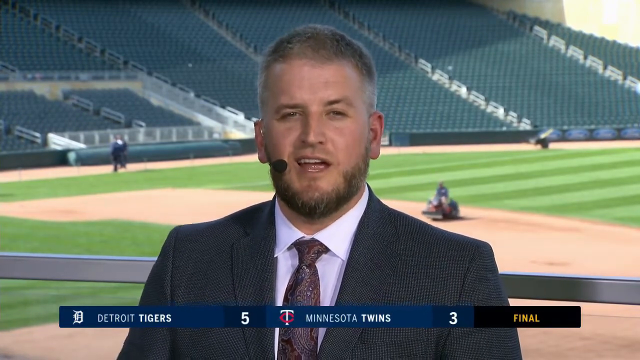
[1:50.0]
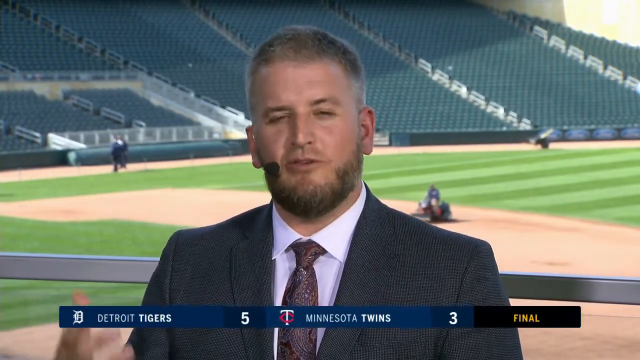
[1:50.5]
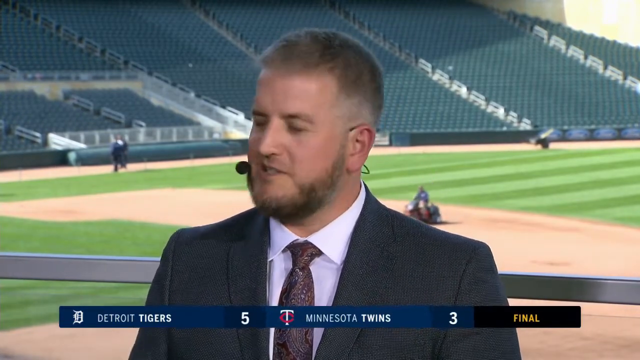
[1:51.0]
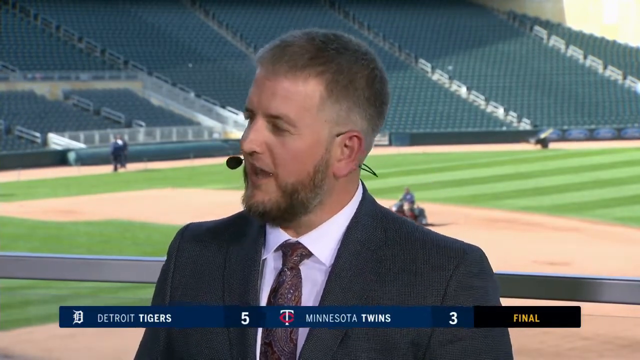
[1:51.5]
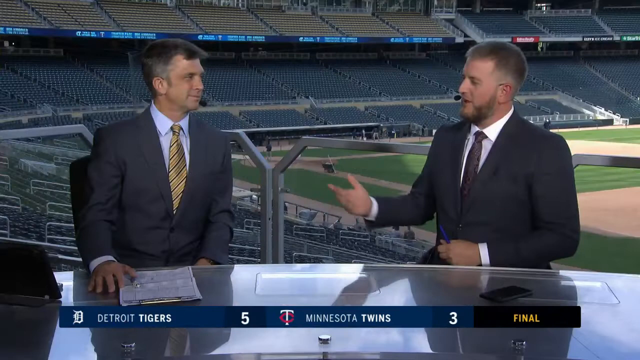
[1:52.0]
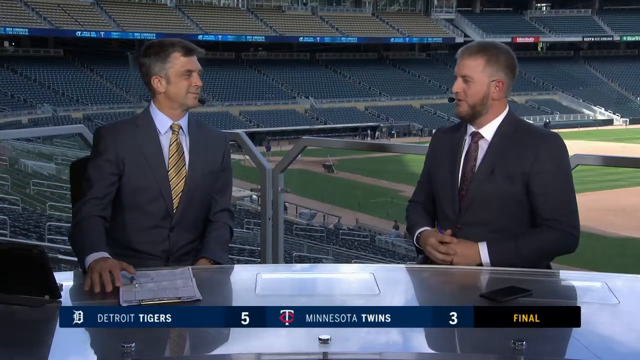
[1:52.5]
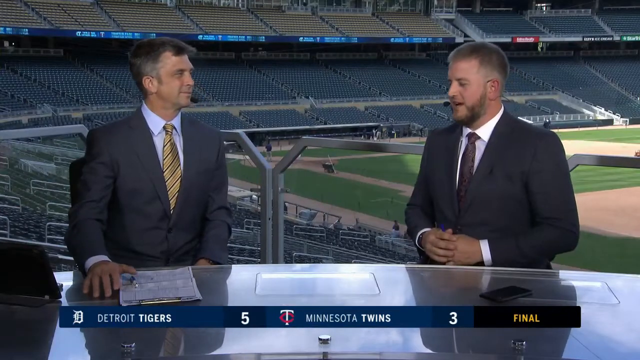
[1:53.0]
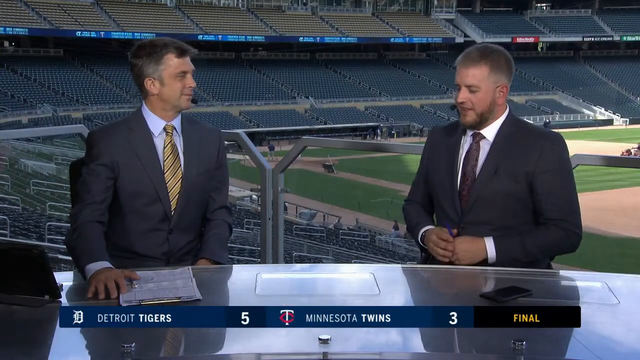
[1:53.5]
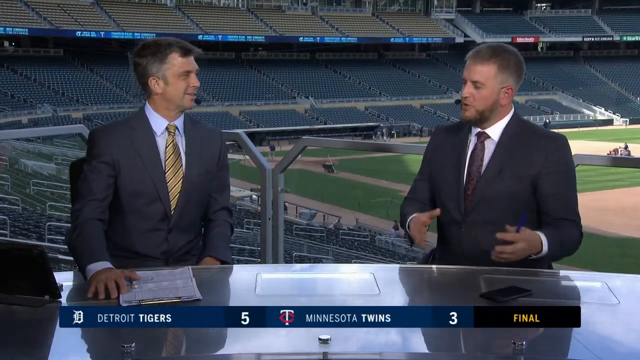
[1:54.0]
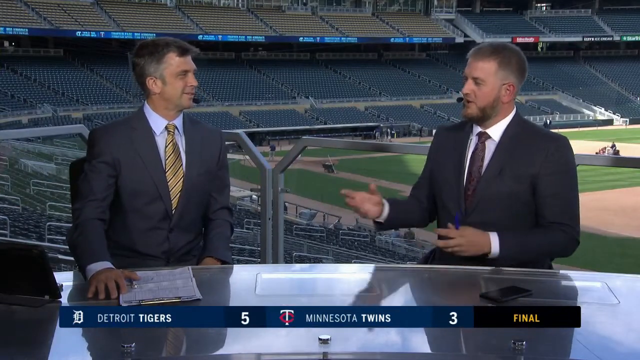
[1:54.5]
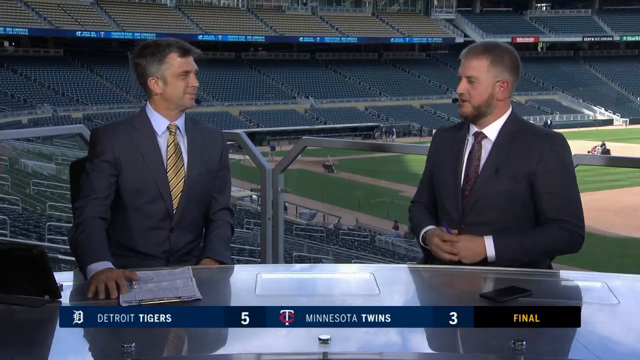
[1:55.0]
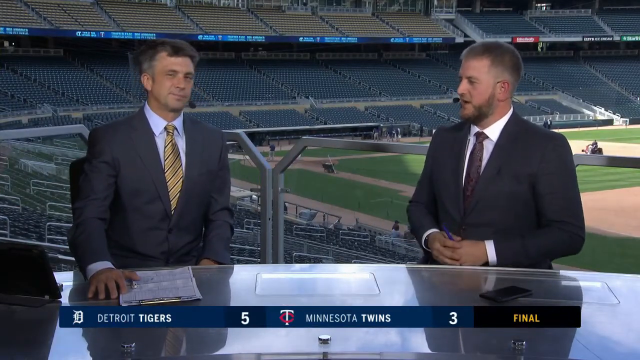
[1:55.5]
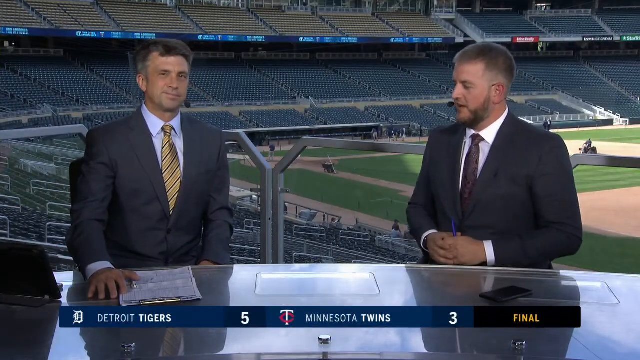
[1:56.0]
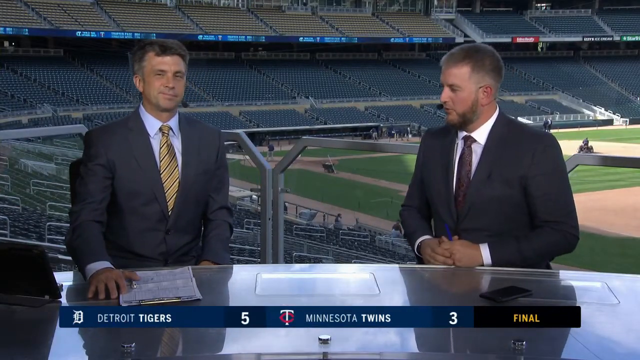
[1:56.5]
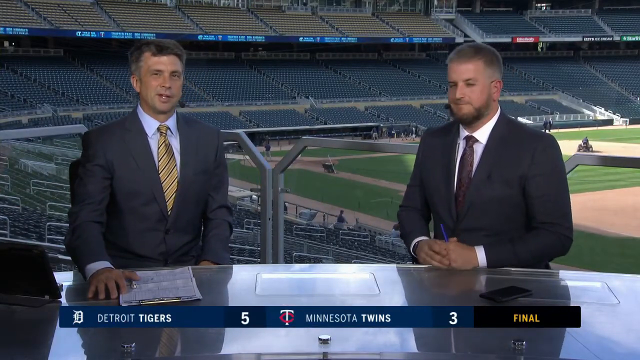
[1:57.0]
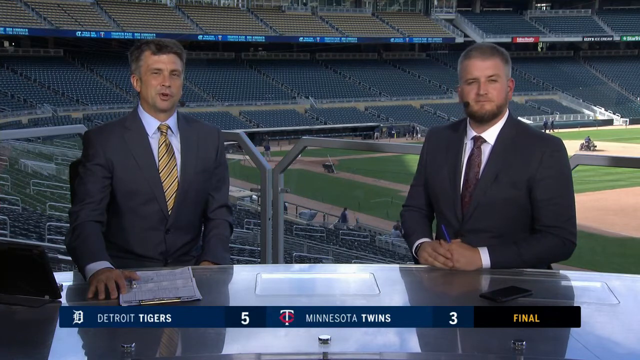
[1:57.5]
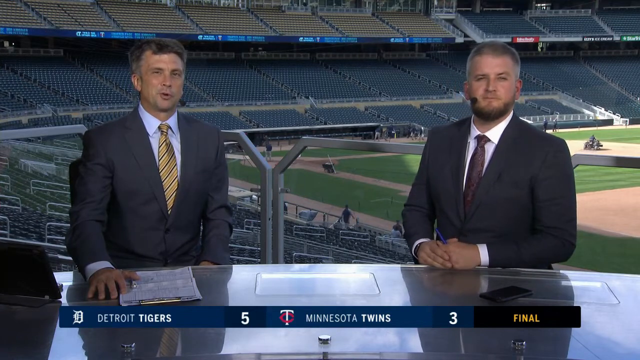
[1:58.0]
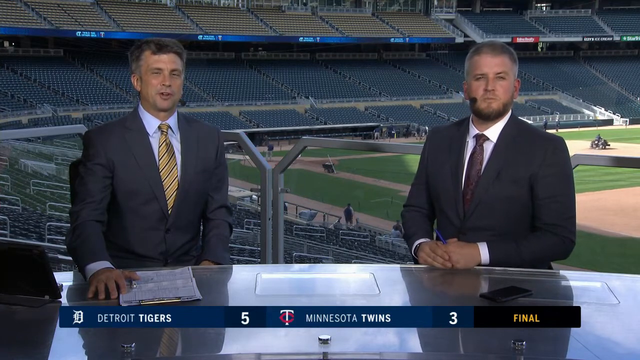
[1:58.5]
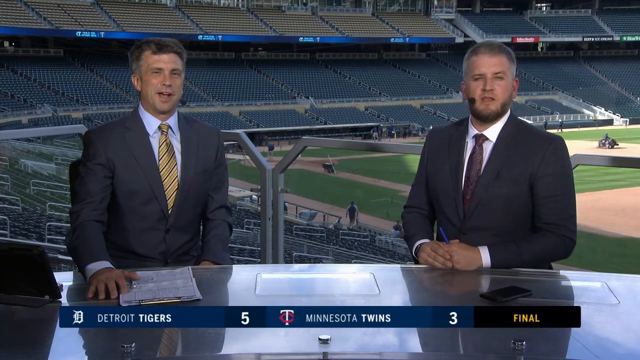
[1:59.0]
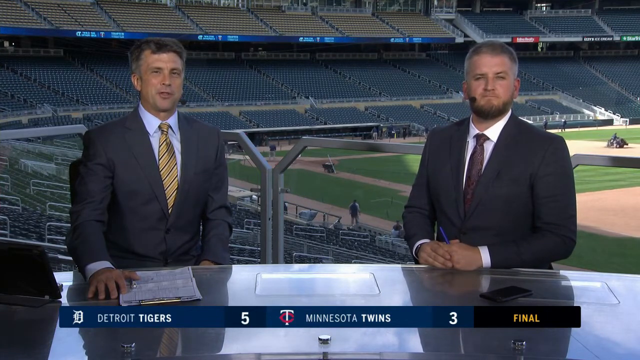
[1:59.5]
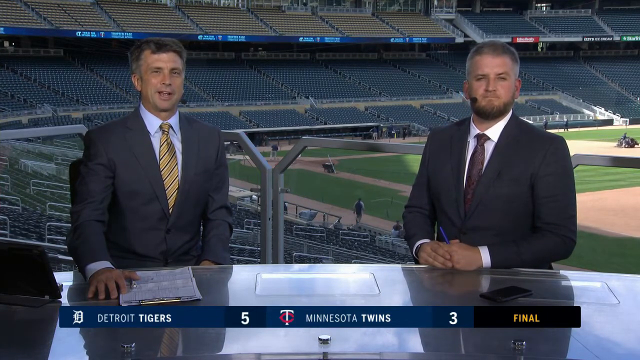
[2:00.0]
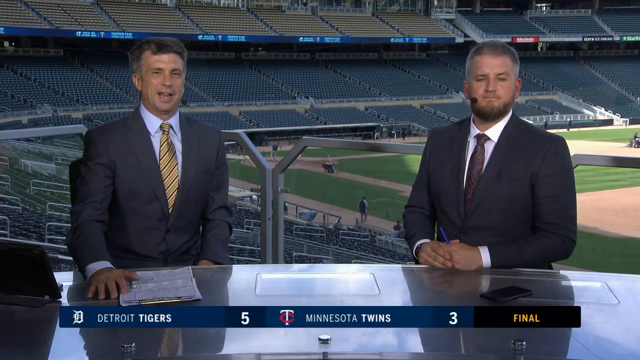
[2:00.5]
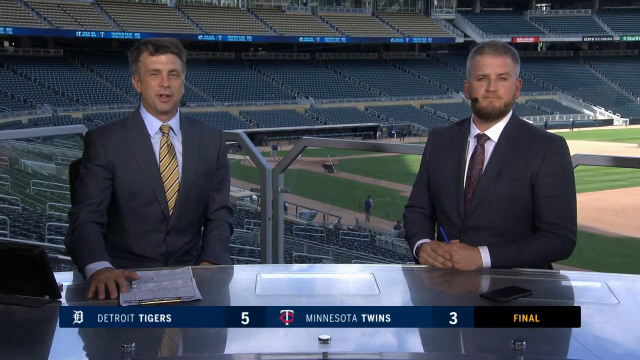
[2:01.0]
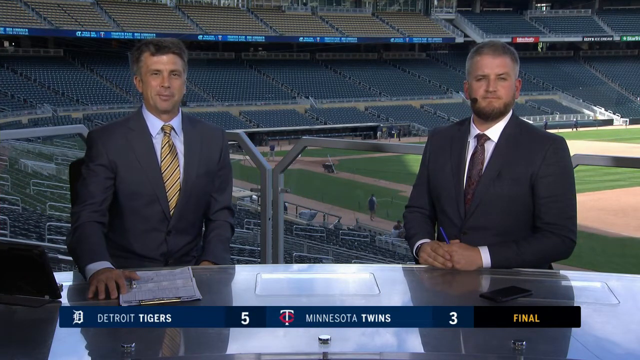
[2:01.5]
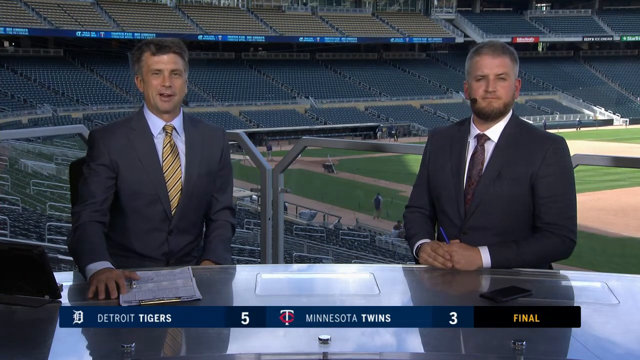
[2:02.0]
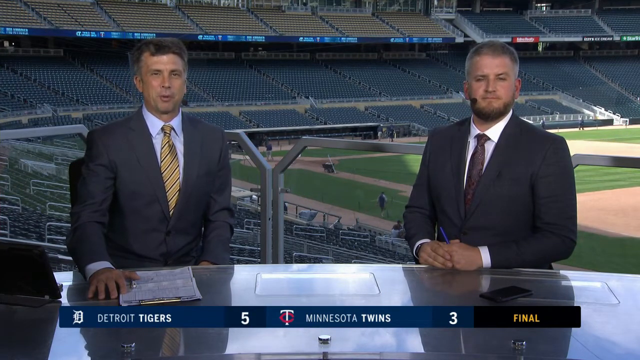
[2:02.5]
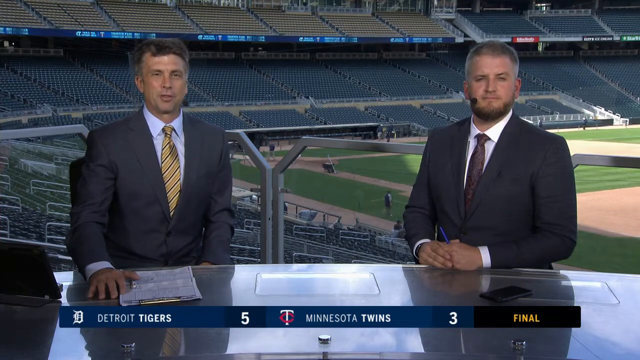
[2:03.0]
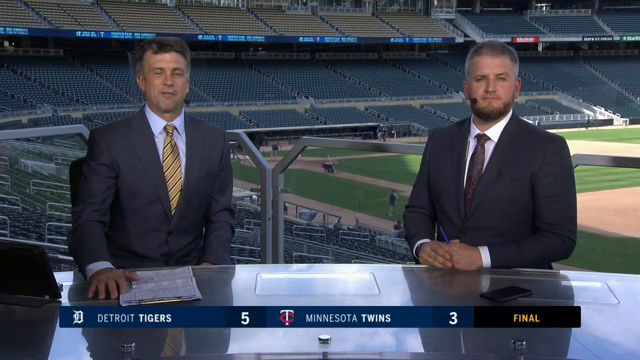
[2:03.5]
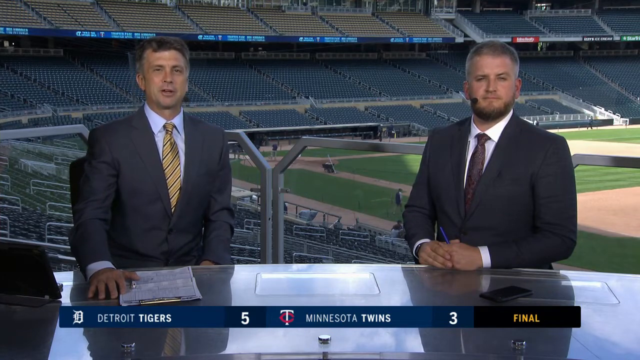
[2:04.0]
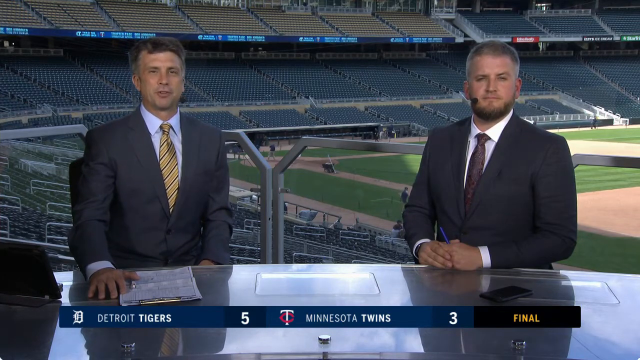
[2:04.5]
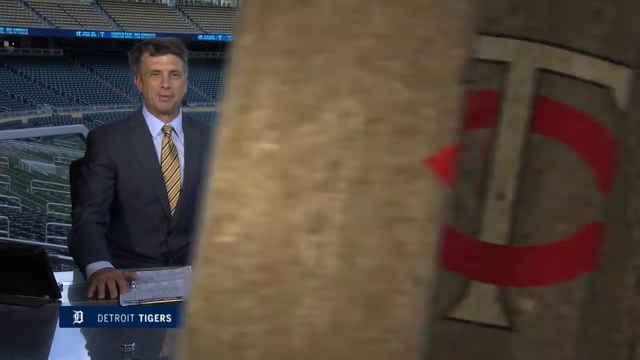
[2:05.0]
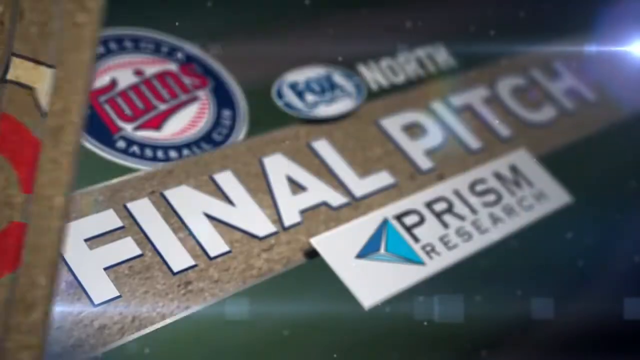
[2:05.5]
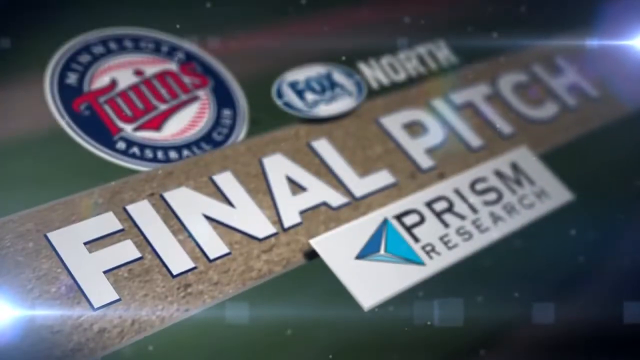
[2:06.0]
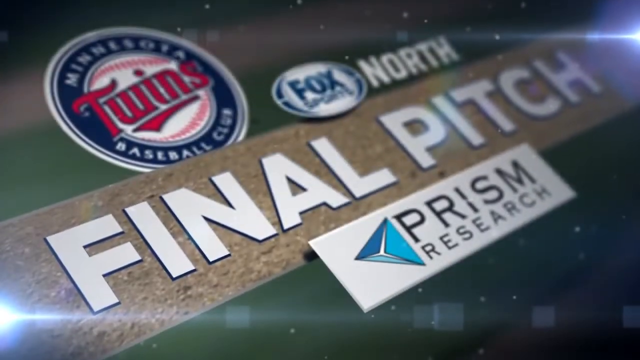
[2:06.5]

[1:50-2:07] The man with the beard speaks to the camera just above field level. The video then cuts back to the two announcers, who now appear about 60 feet back and 90 feet higher than before. Various officials mill about the field, along with the grounds crew and some players in the press area just to the left of the visitors' dugout at Target Field. The men speak to each other, with the man on the right speaking much more than the man on the left. The man on the left wears a diagonally striped gold and black tie; he then speaks to the camera and is older than the other man. Finally, the words "final pitch" appear on the screen, apparently the name of this wrap-up show, which is sponsored by Prism Research.